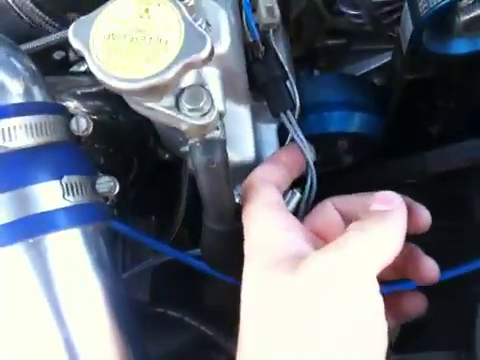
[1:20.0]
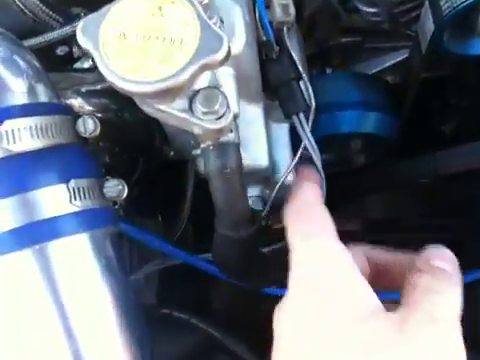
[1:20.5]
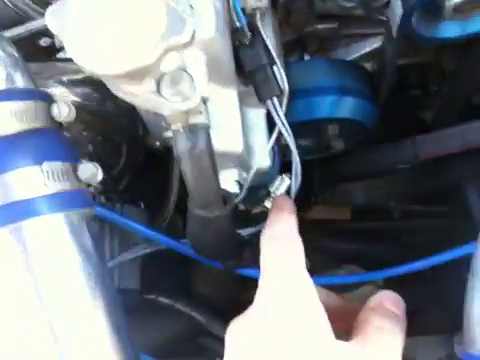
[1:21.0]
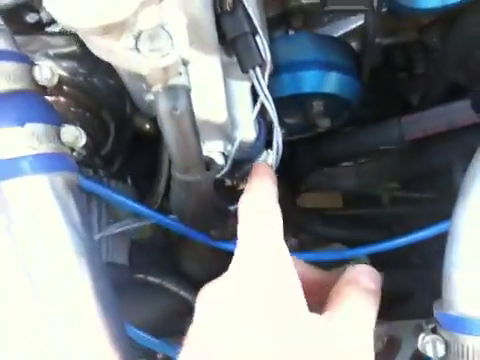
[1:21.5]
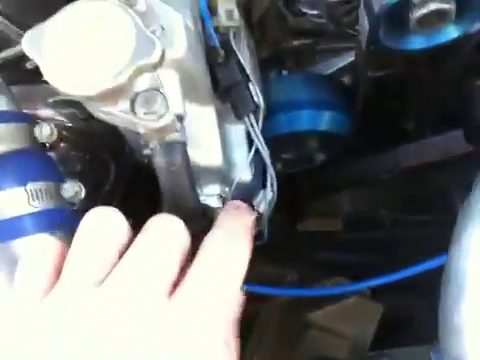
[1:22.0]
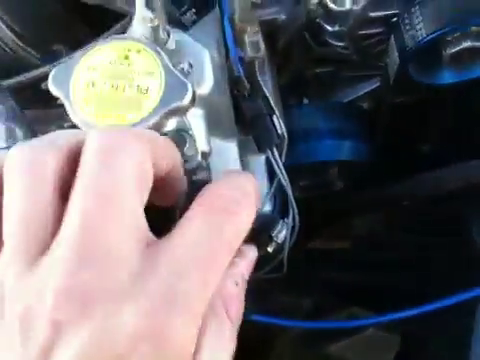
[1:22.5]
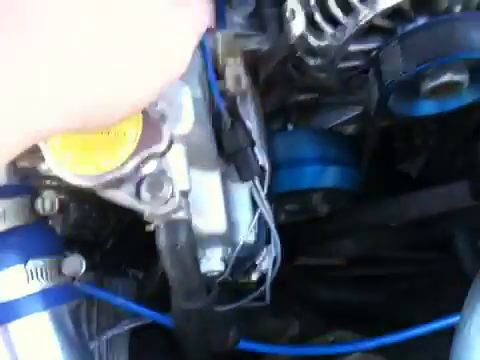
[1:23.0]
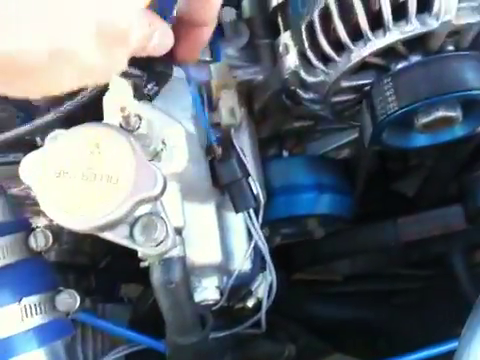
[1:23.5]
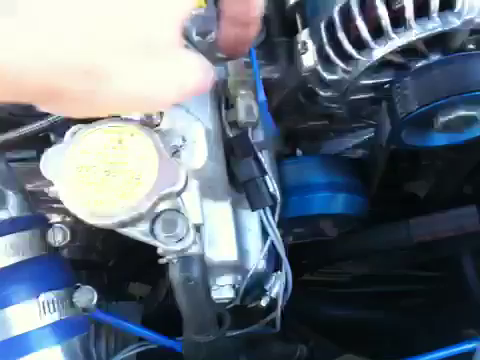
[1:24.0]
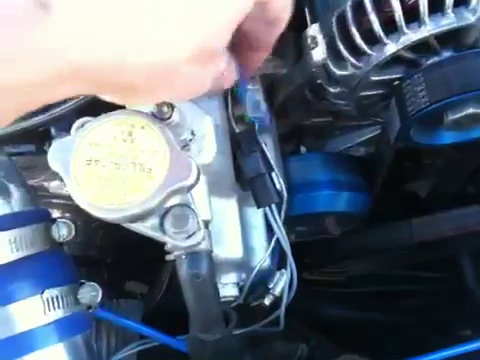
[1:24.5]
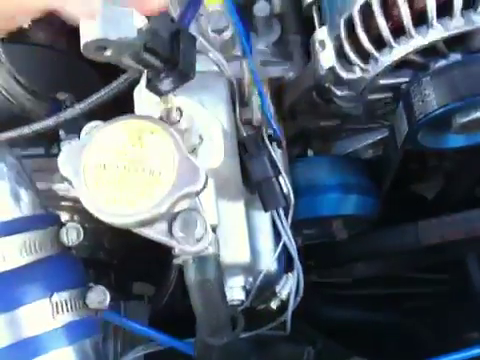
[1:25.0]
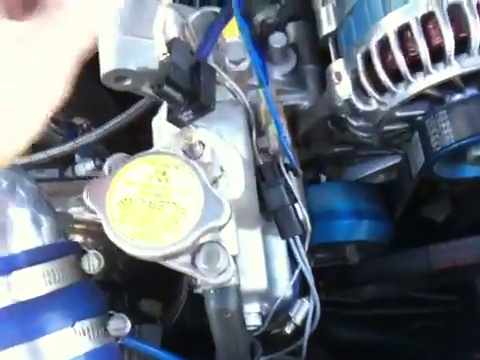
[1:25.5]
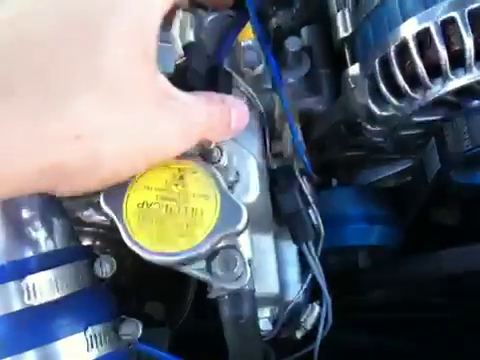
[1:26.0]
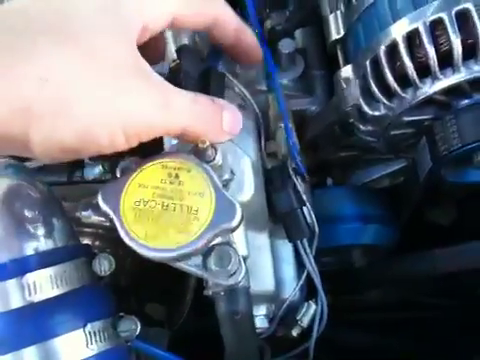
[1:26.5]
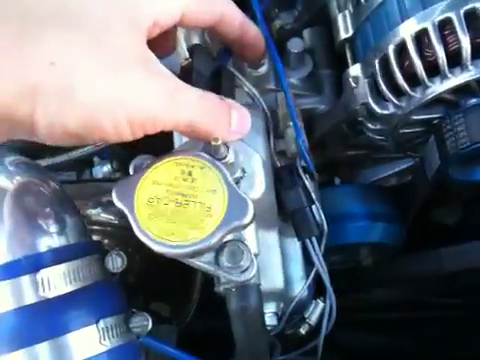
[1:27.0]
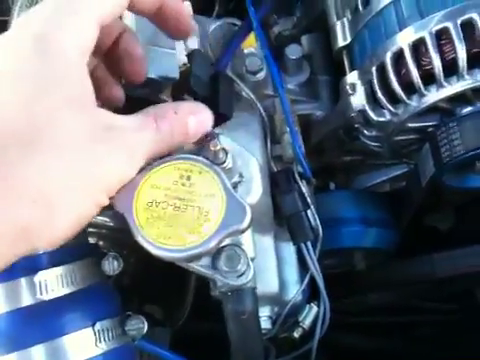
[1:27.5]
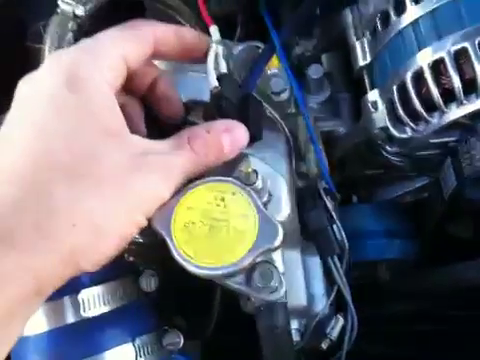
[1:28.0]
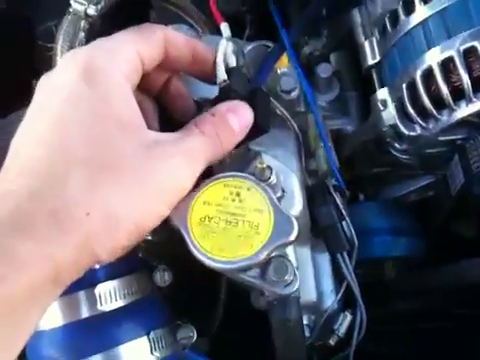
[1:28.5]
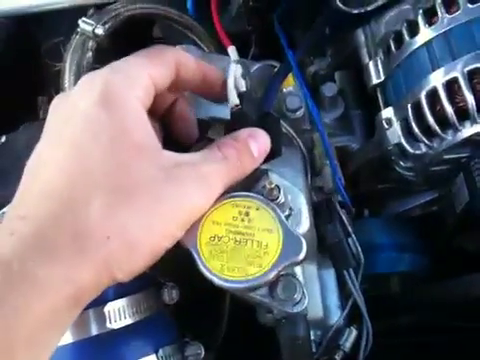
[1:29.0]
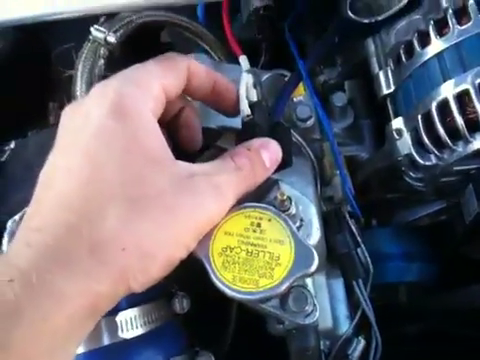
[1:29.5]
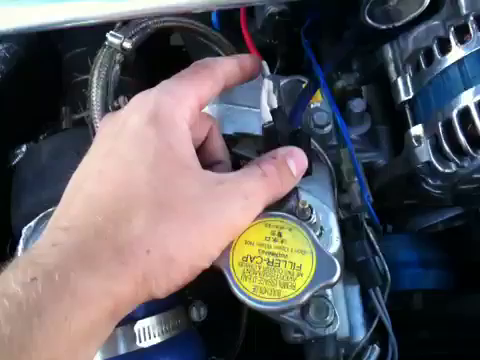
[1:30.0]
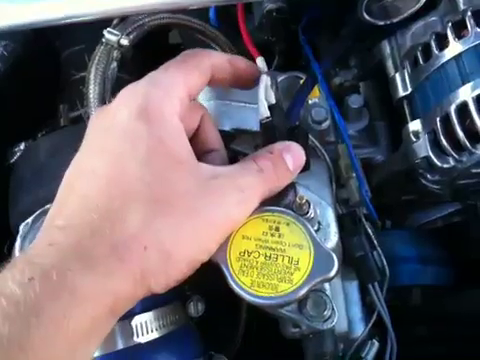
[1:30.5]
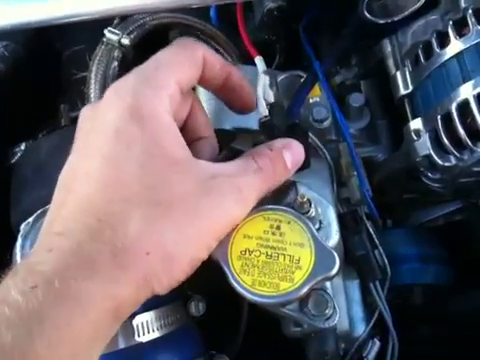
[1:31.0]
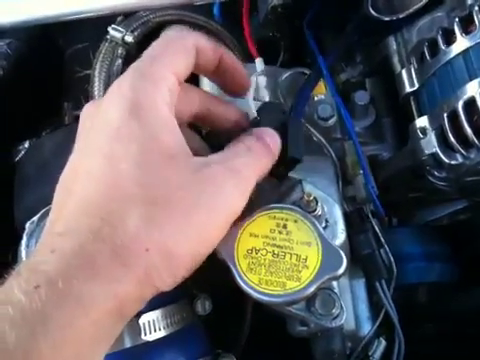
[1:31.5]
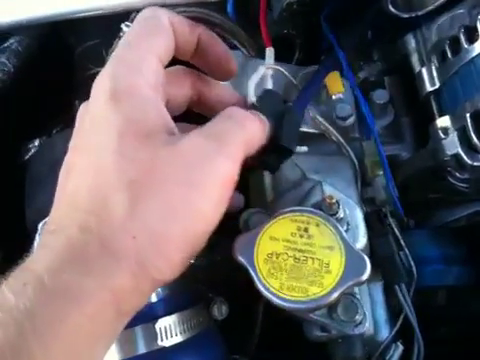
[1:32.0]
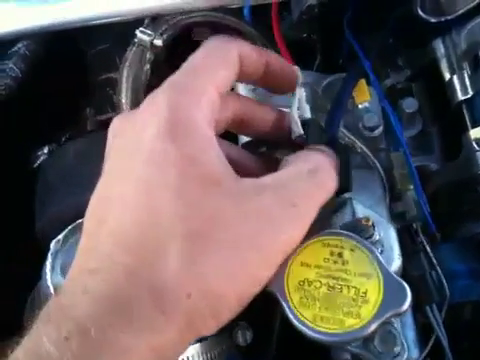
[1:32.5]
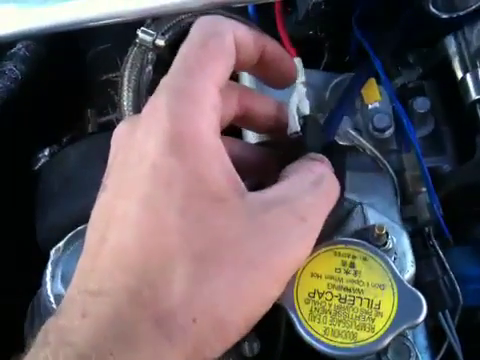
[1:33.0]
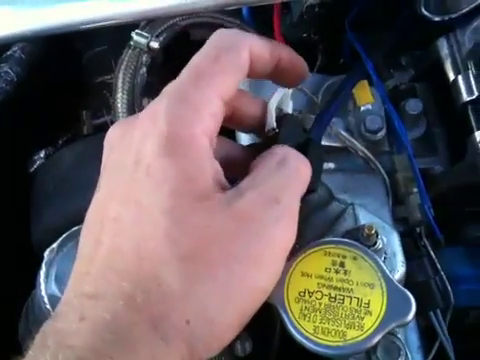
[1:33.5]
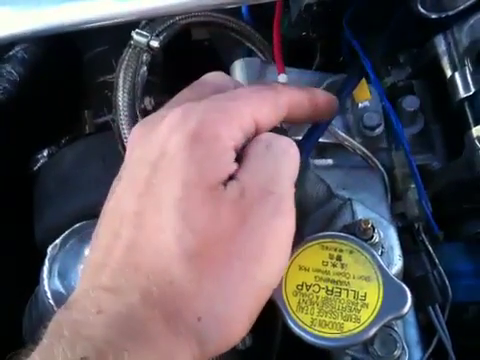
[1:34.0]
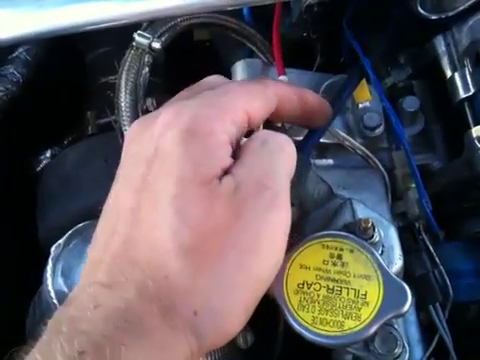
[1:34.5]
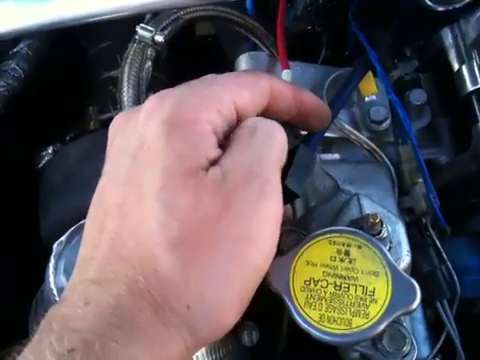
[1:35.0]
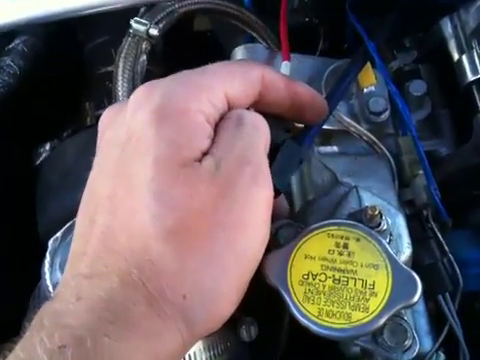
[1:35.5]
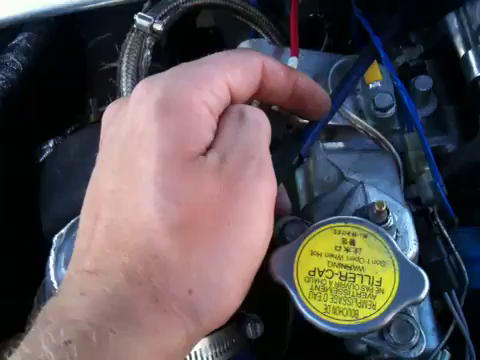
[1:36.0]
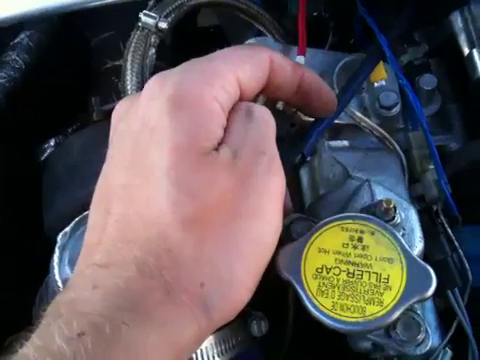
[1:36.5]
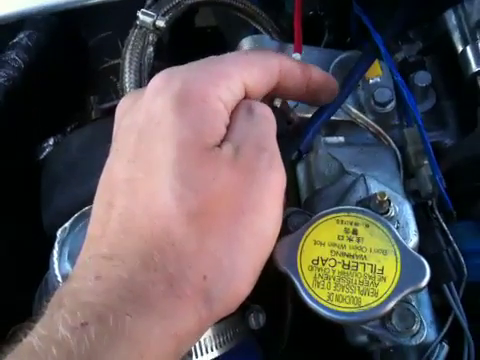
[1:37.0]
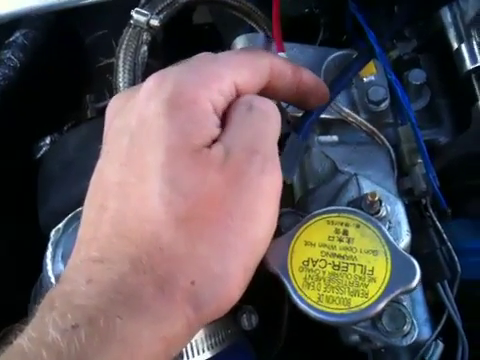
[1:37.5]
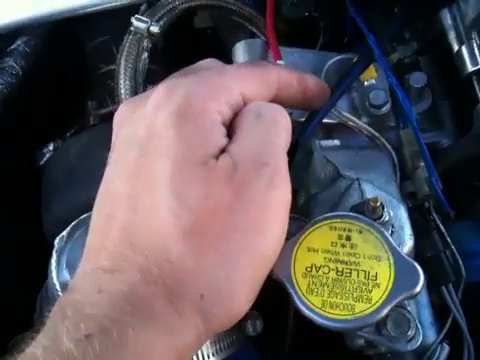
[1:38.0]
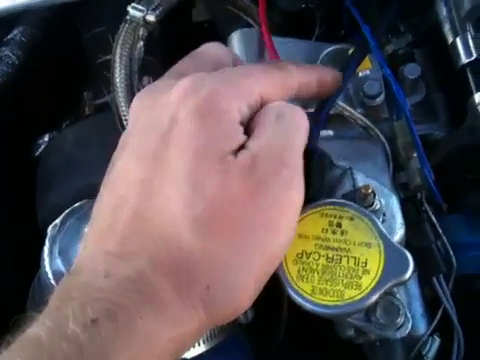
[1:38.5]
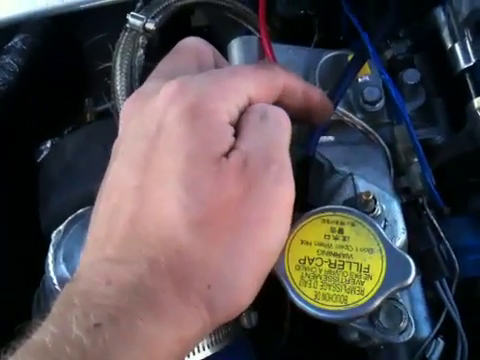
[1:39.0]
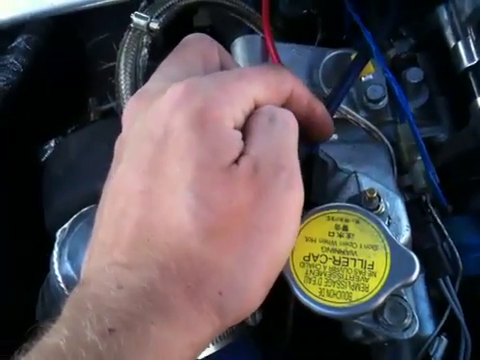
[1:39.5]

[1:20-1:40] With his left index finger, the person touches the silver wires on the right side of the hood, then the blue wiring and other sections. The silver brass section he moves across looks to be near the engine, and many wires appear connected to one another. The vehicle looks to be a heavy-duty, high-level vehicle. His hand is quite pale as he checks where a specific blue wire is not connected to anything, apparently making sure it is connected so it is not loose.